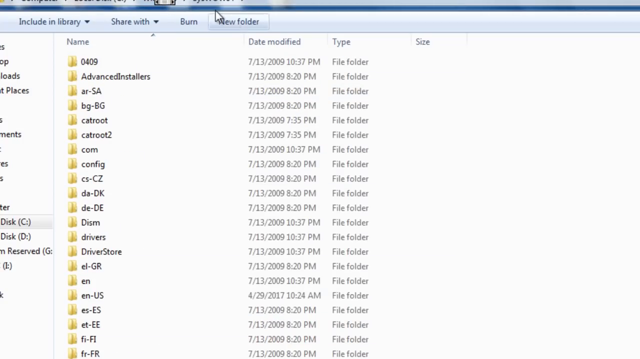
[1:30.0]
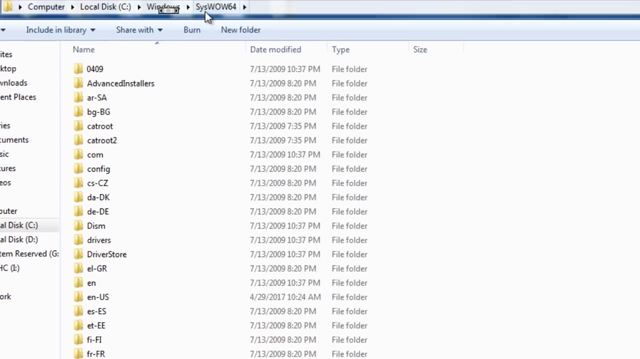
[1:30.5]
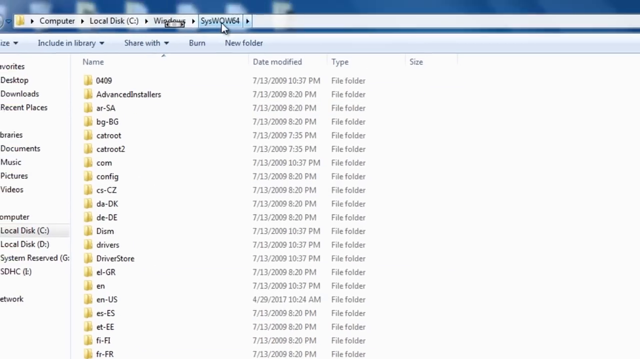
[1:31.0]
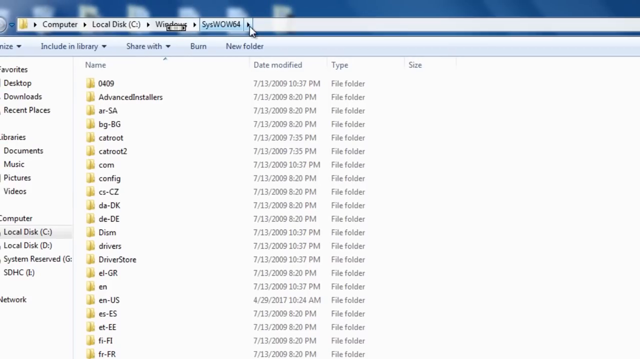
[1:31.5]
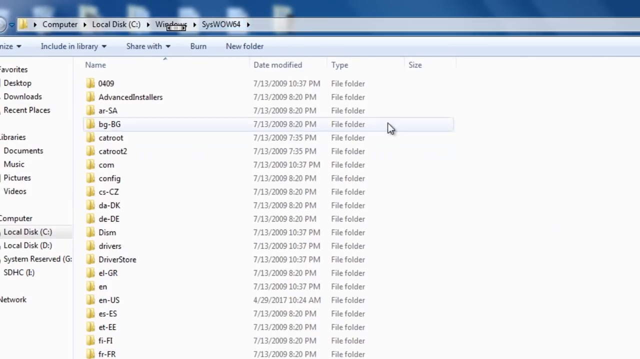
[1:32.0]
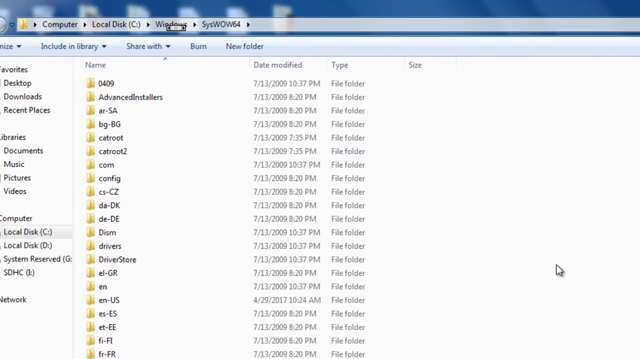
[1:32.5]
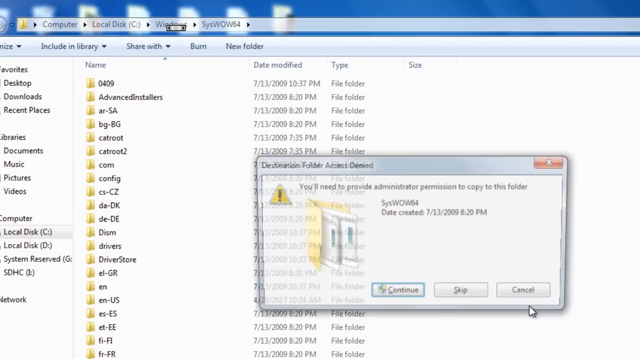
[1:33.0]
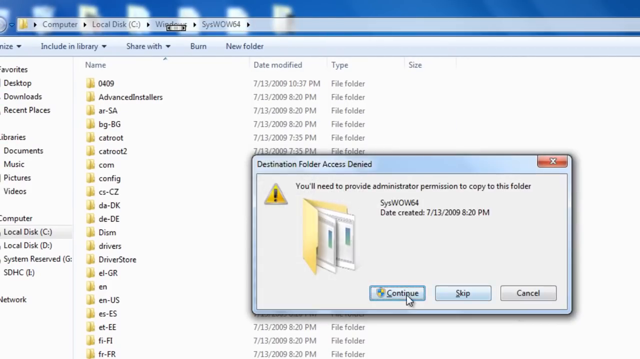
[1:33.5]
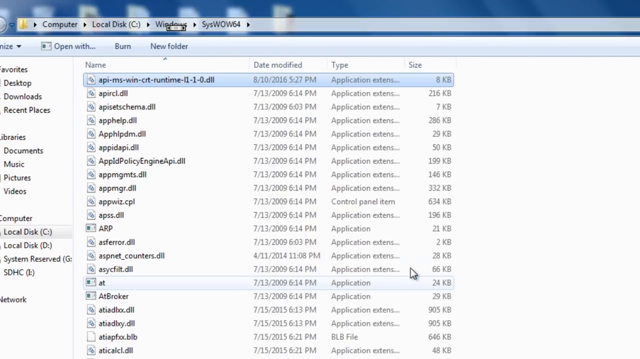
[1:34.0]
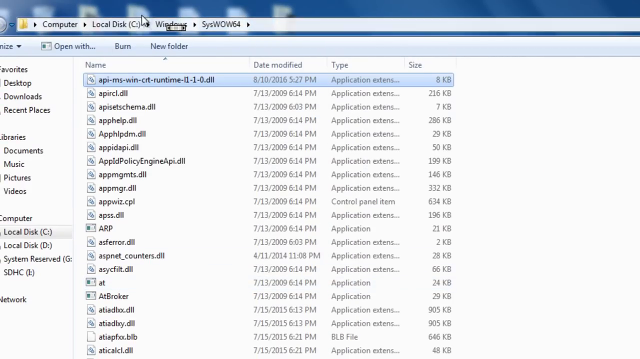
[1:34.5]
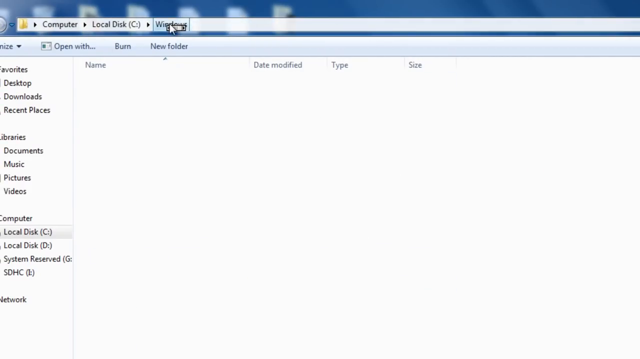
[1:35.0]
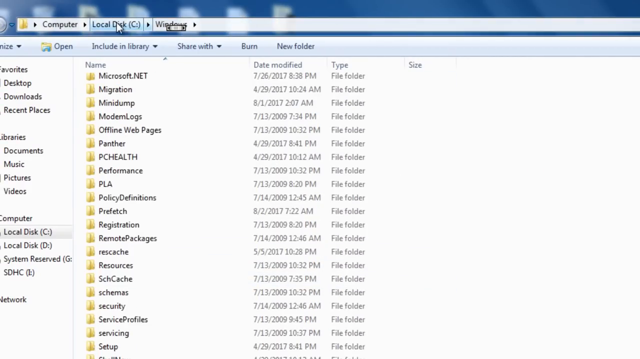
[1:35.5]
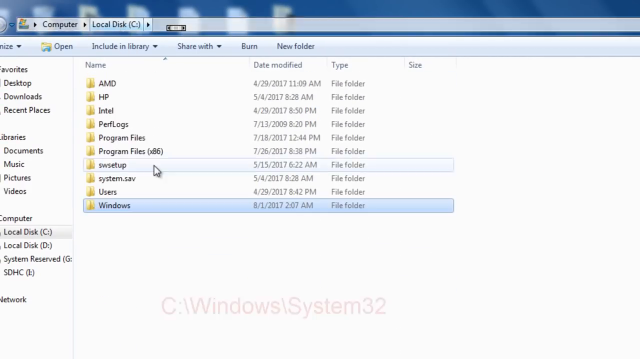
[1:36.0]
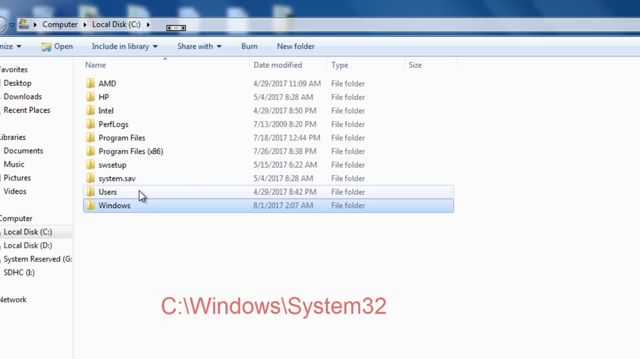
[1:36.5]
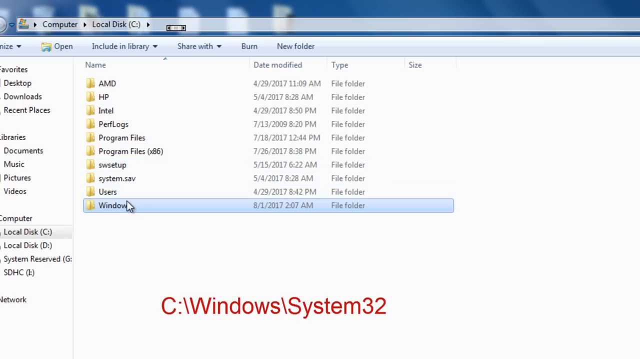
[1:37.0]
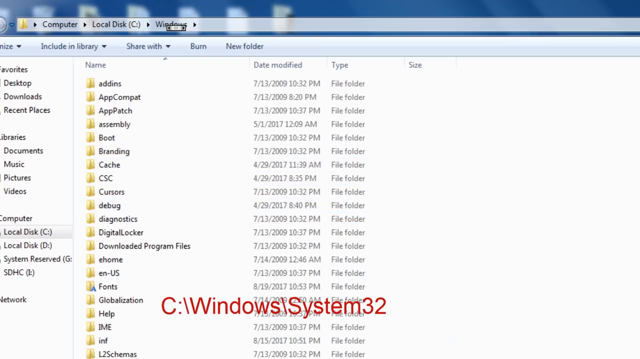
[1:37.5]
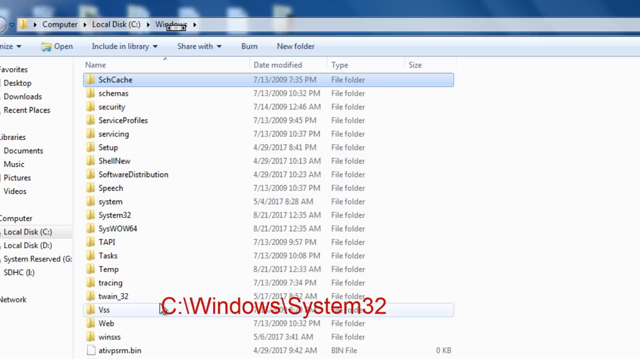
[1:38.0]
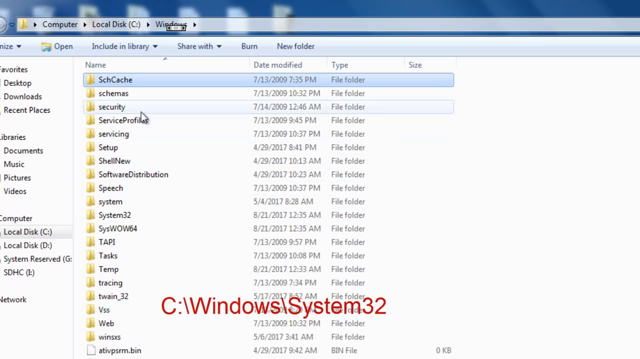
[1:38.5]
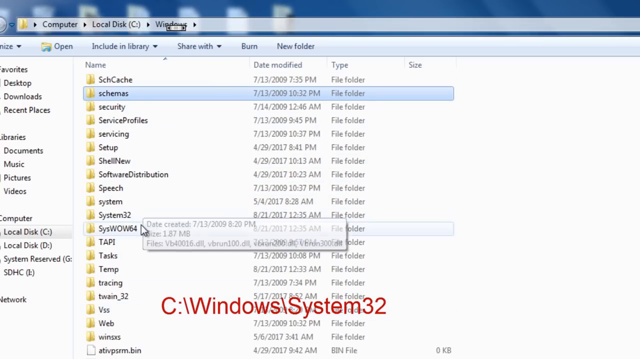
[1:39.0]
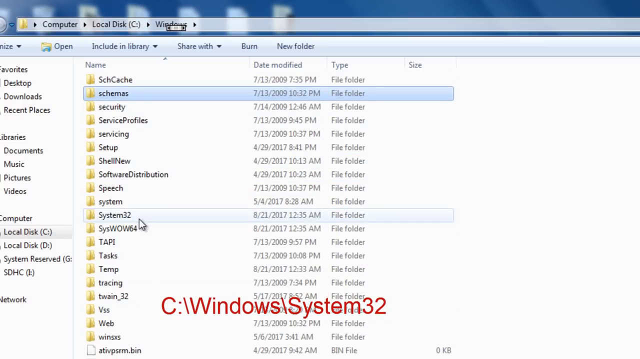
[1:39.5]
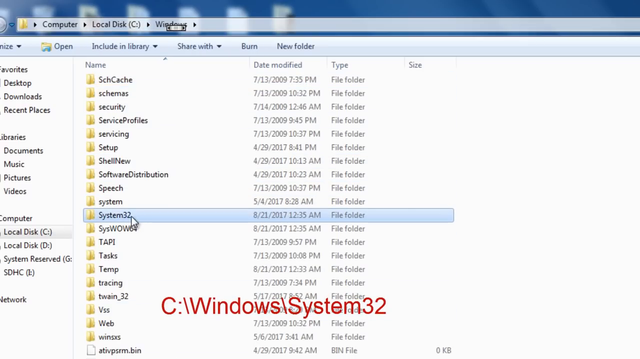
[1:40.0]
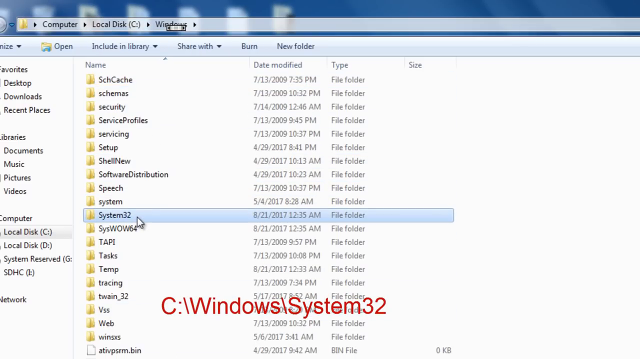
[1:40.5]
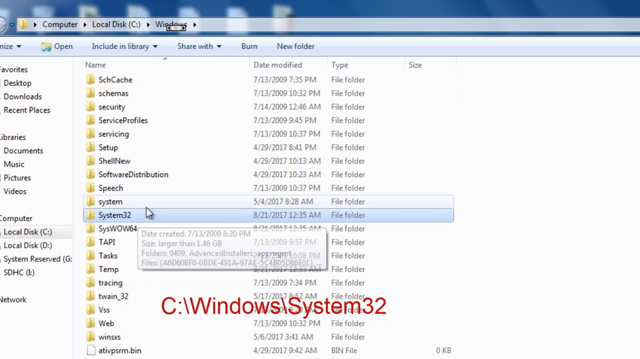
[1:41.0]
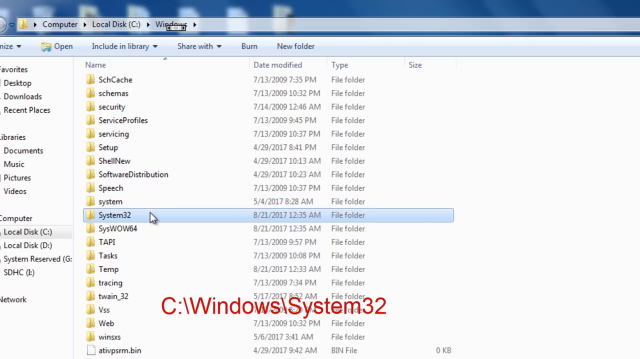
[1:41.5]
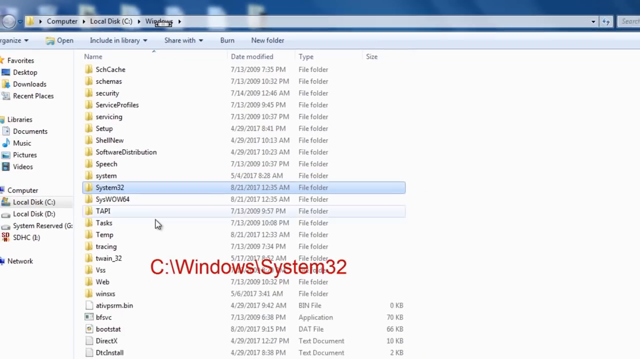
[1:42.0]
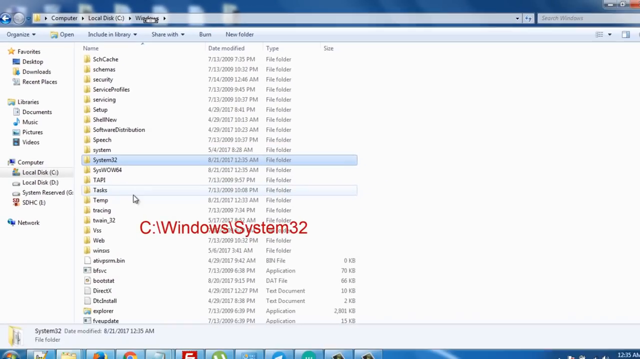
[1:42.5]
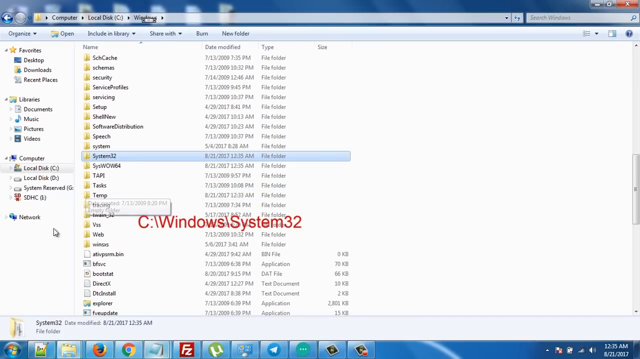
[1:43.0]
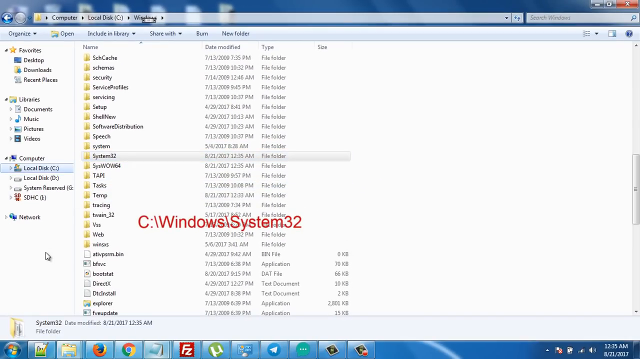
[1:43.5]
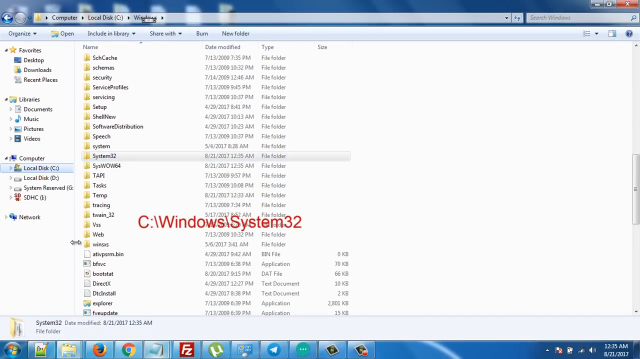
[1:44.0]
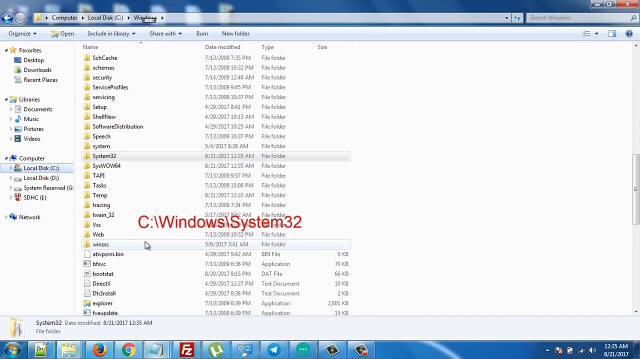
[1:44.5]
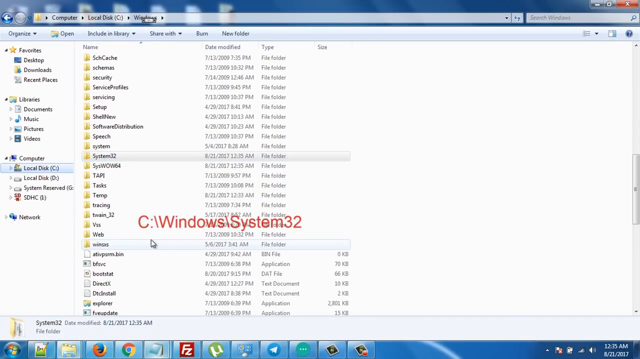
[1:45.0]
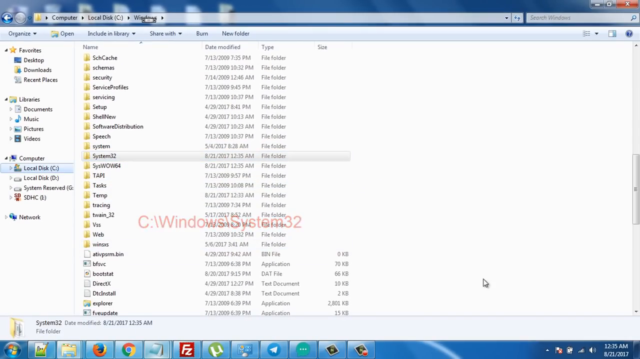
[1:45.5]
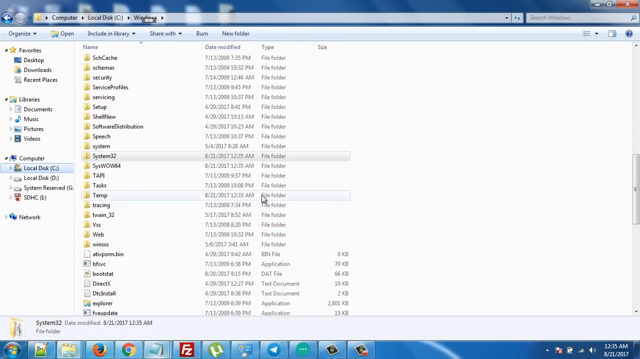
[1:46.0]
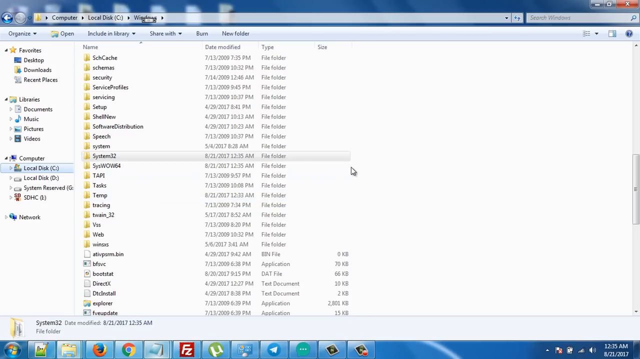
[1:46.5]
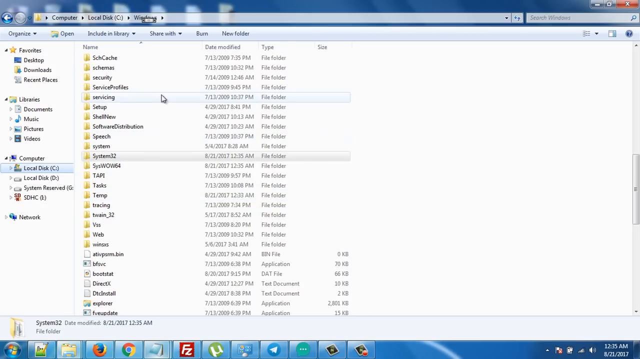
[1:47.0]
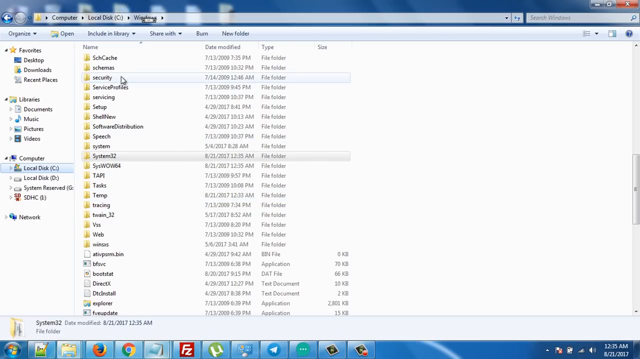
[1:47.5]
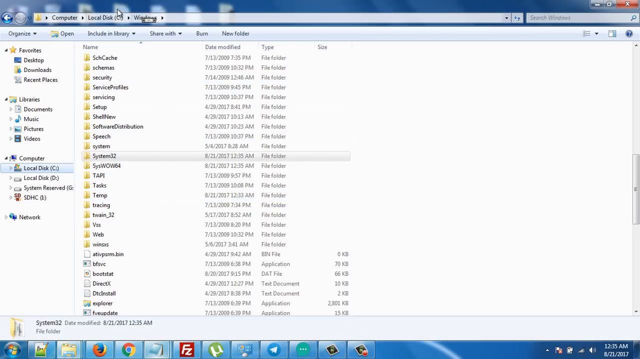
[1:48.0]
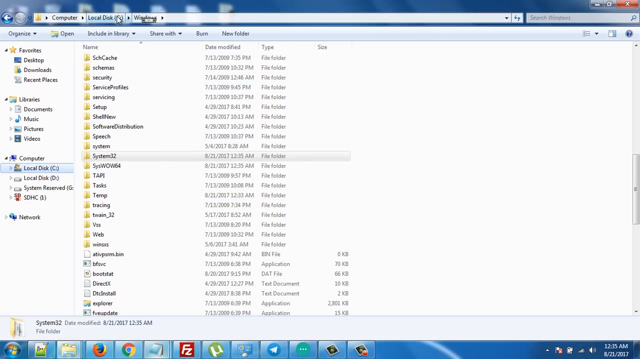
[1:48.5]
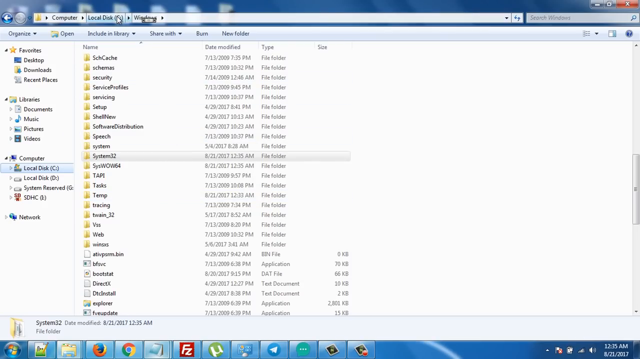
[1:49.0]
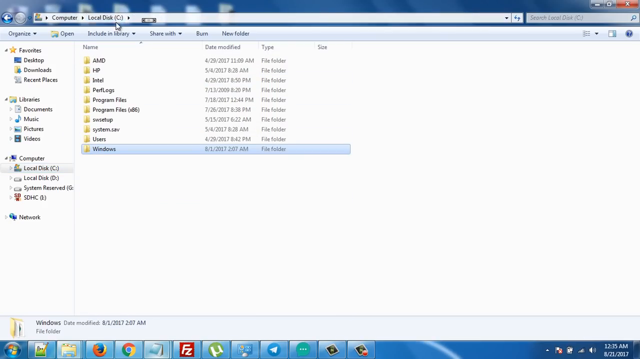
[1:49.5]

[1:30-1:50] The person clicks on Windows and then on System32, seemingly doing the same thing as before. The message "You'll need to provide administrator permission to copy this folder" appears again for System32, date created 7-13-2009 at 8:20, possibly the same one as before. The person clicks Continue. Next, a folder spelled S-Y-D-W-O-W-64, date created 7-13-2009 at 8:20 pm, comes up with the message "You need to provide administrator permission to copy this folder." The person then clicks on Windows at the bottom and clicks on System32 as before.